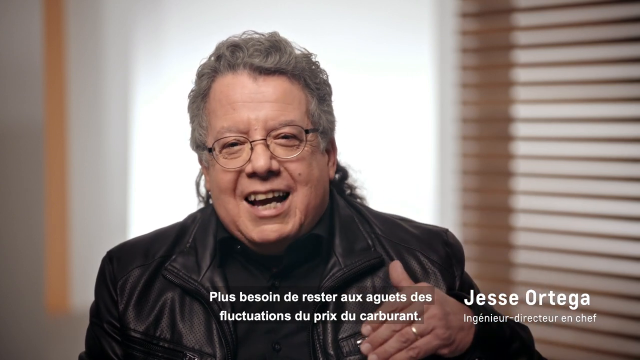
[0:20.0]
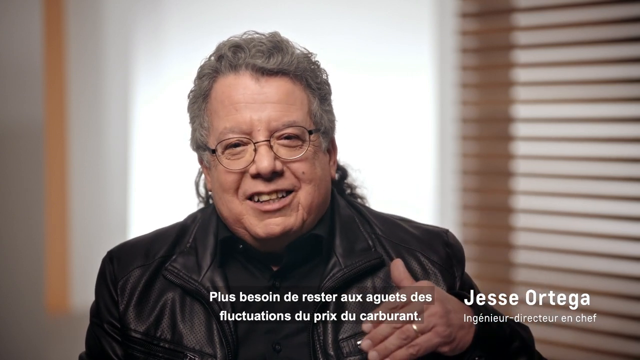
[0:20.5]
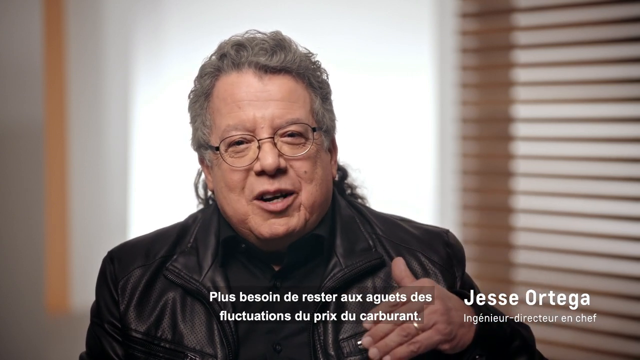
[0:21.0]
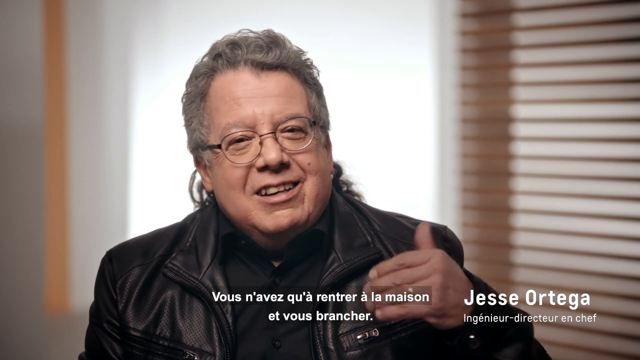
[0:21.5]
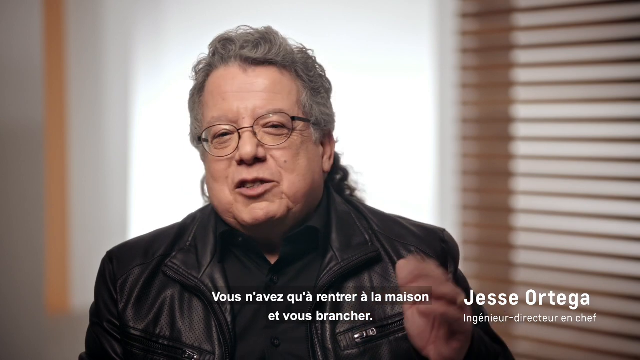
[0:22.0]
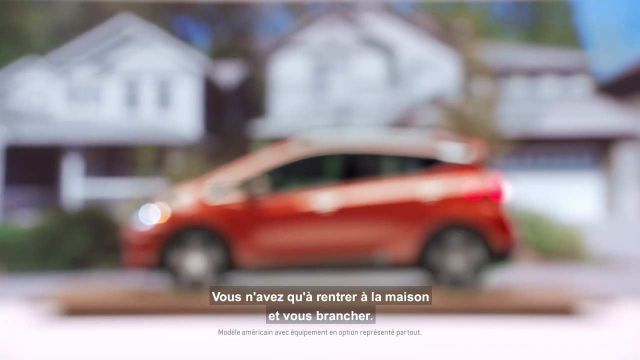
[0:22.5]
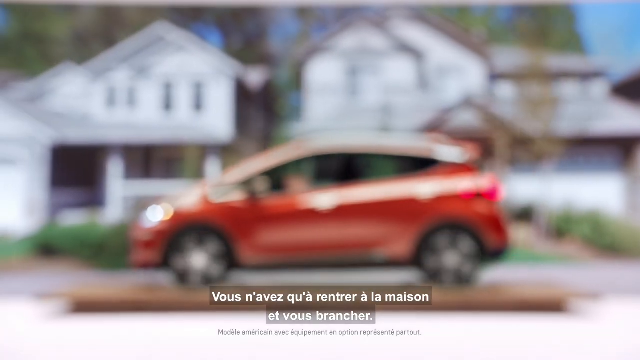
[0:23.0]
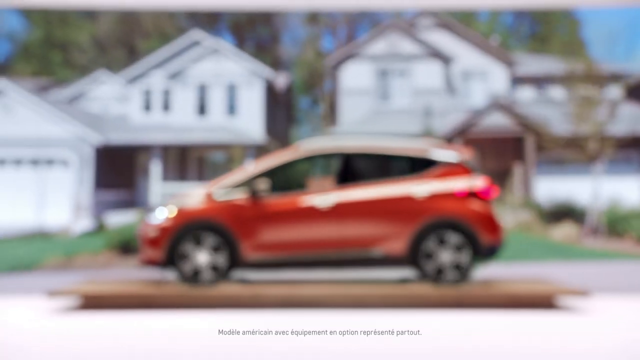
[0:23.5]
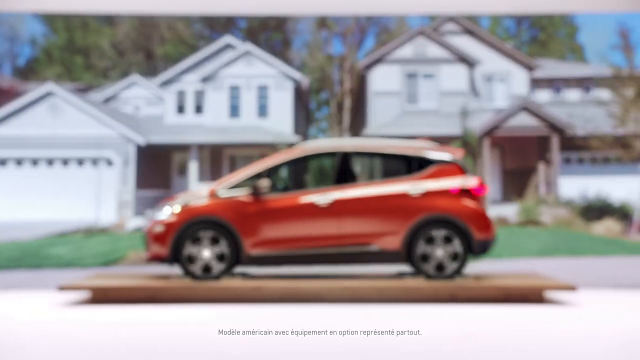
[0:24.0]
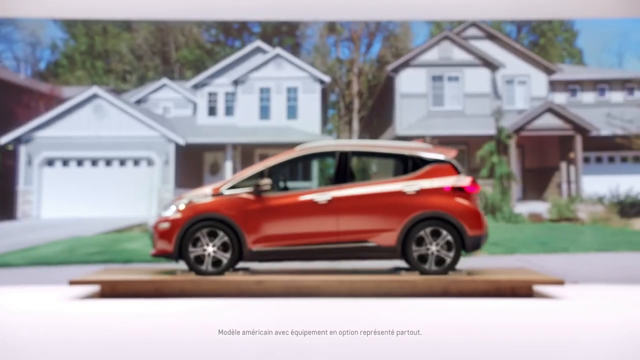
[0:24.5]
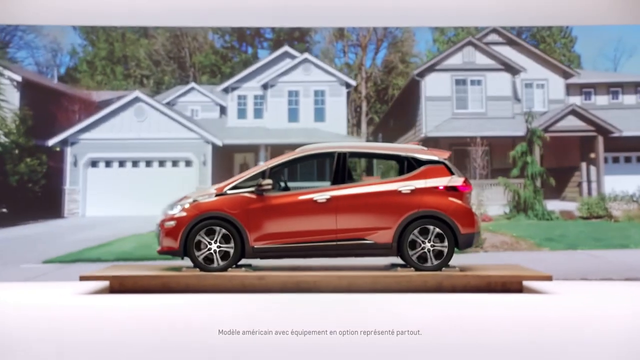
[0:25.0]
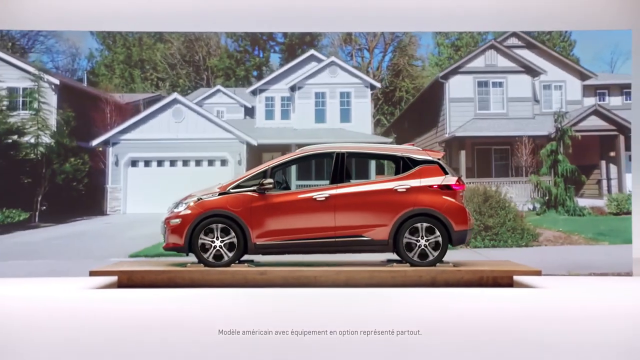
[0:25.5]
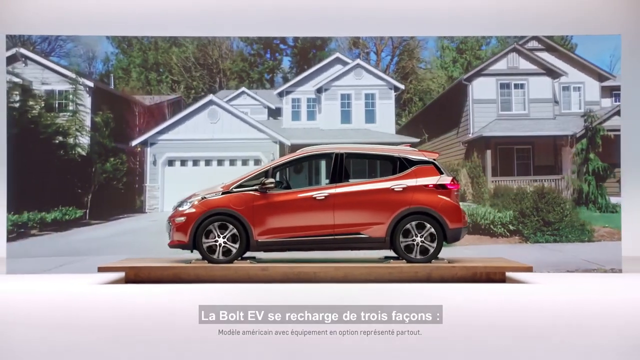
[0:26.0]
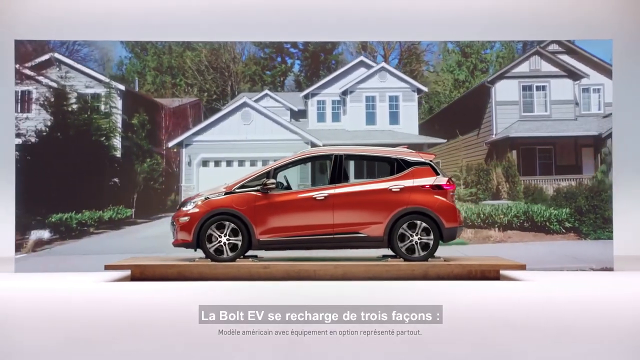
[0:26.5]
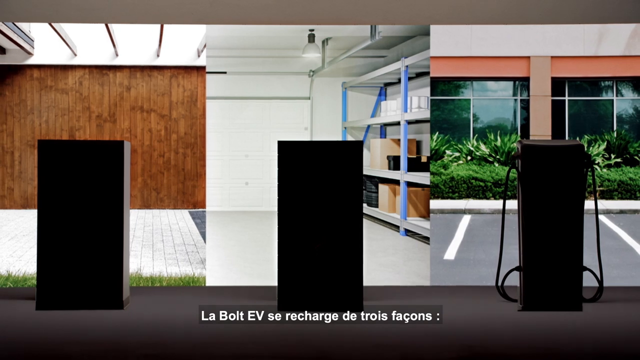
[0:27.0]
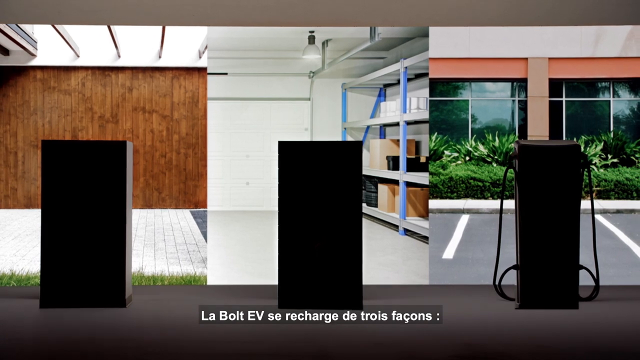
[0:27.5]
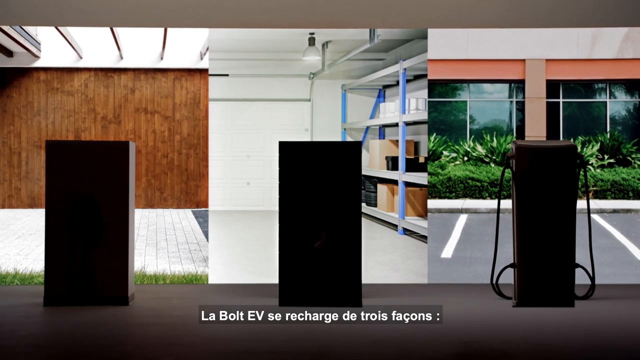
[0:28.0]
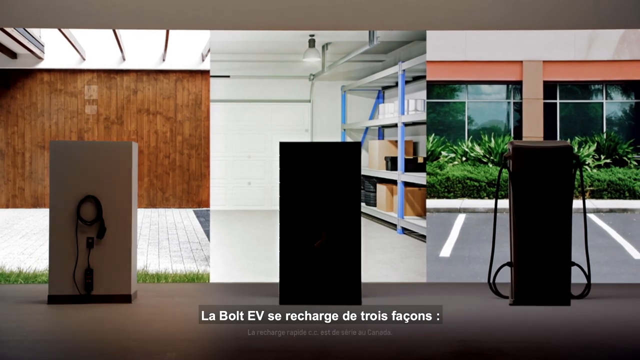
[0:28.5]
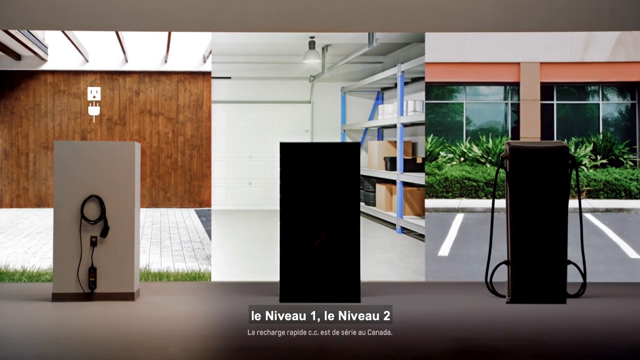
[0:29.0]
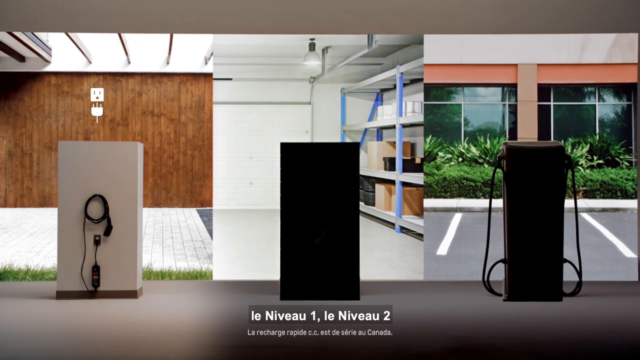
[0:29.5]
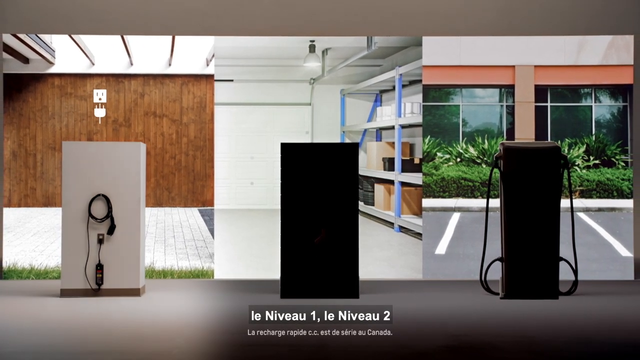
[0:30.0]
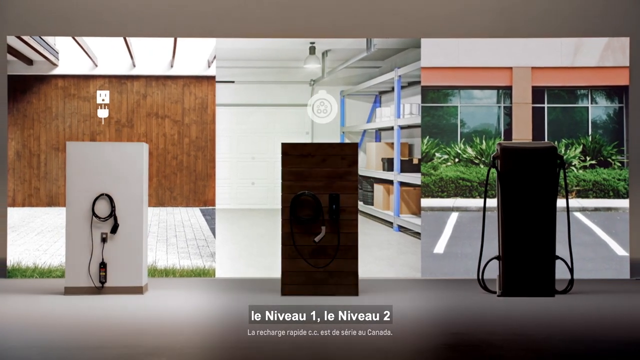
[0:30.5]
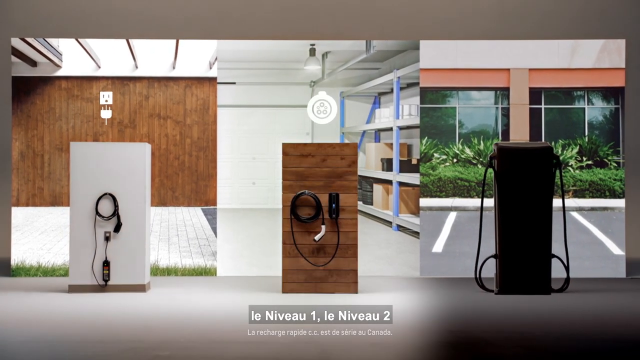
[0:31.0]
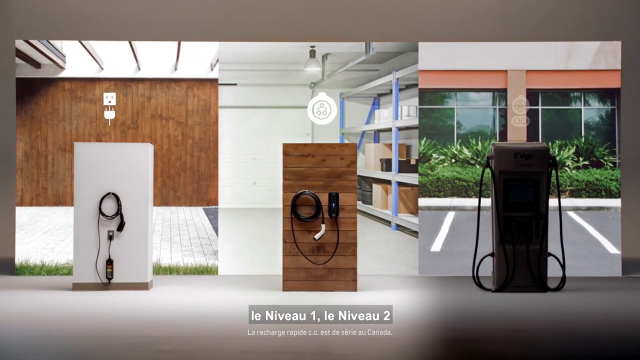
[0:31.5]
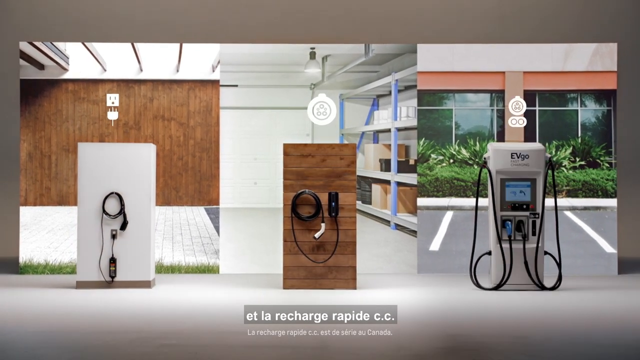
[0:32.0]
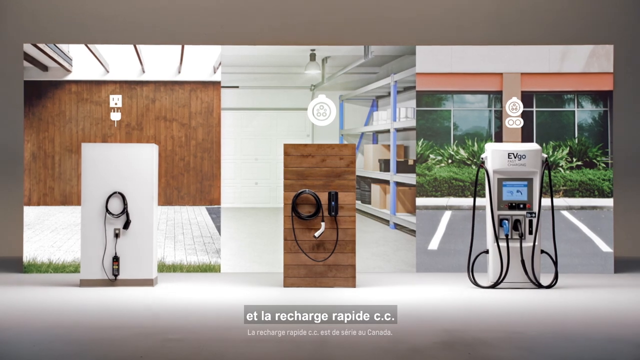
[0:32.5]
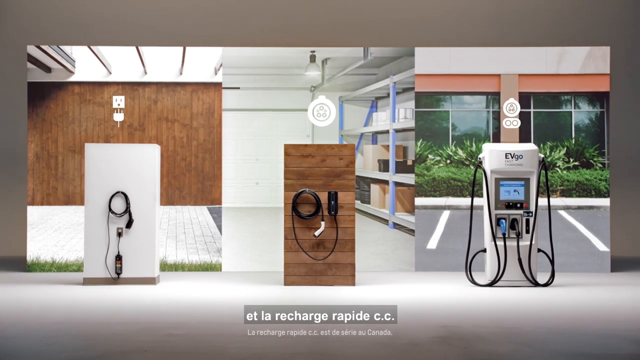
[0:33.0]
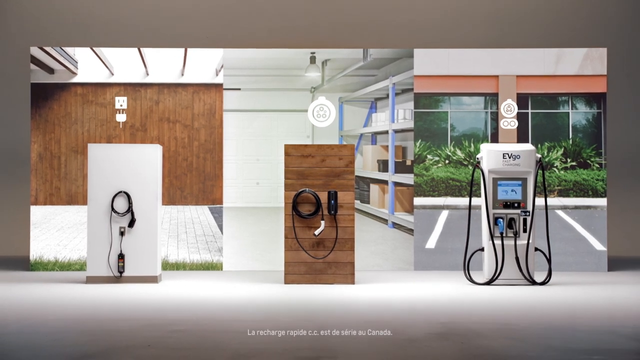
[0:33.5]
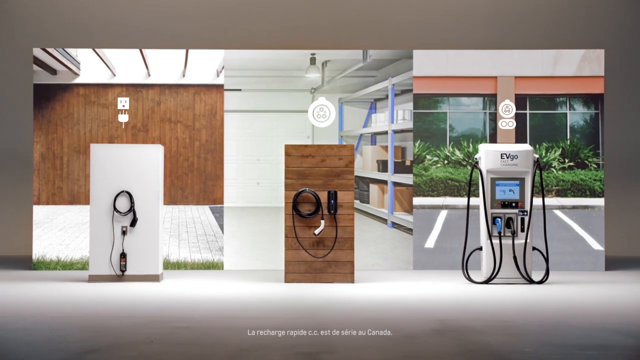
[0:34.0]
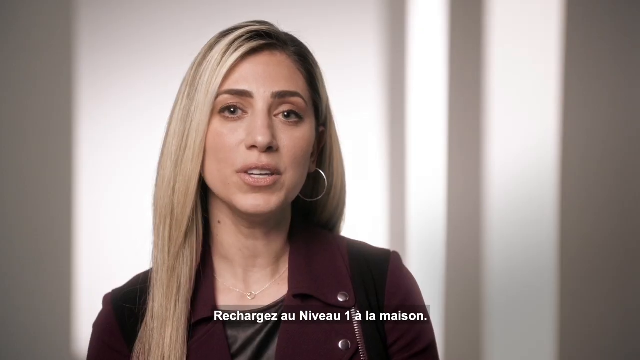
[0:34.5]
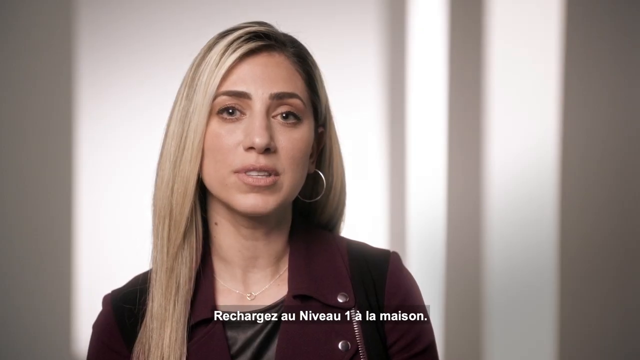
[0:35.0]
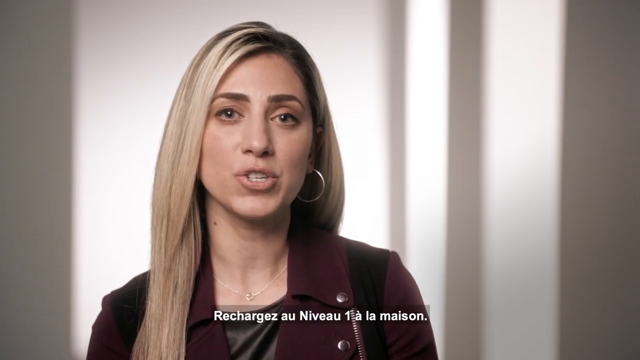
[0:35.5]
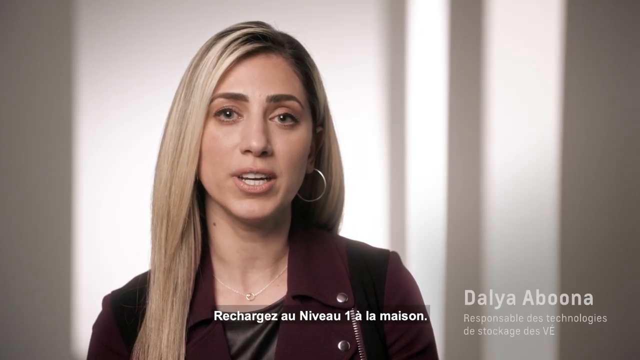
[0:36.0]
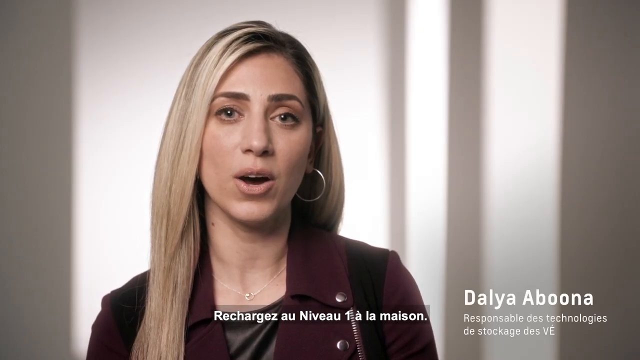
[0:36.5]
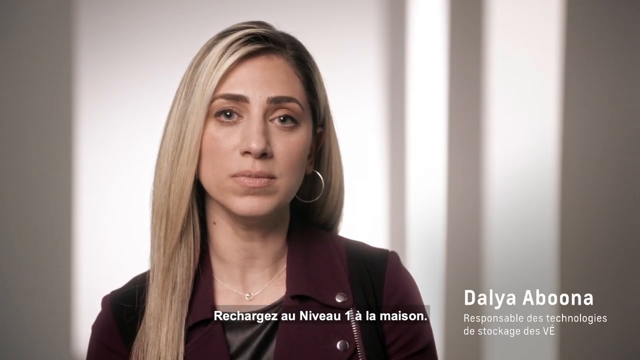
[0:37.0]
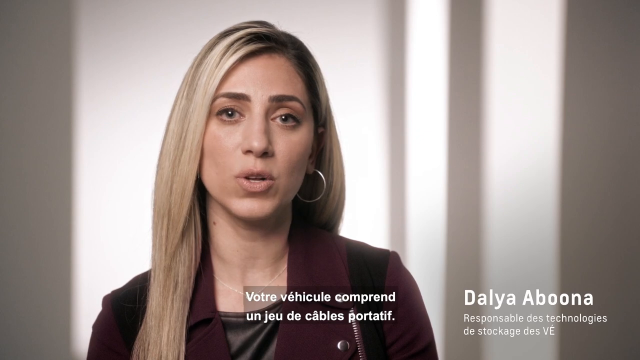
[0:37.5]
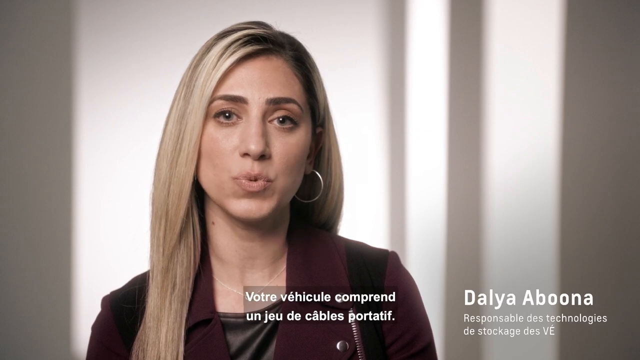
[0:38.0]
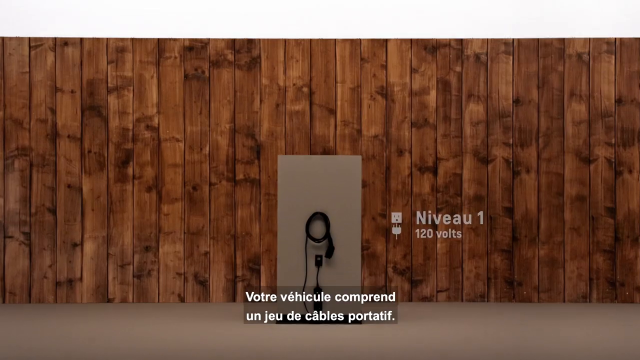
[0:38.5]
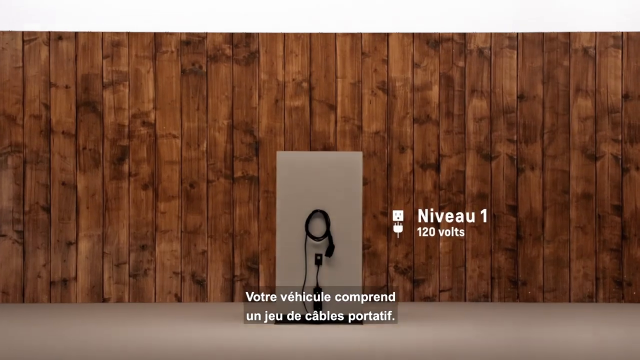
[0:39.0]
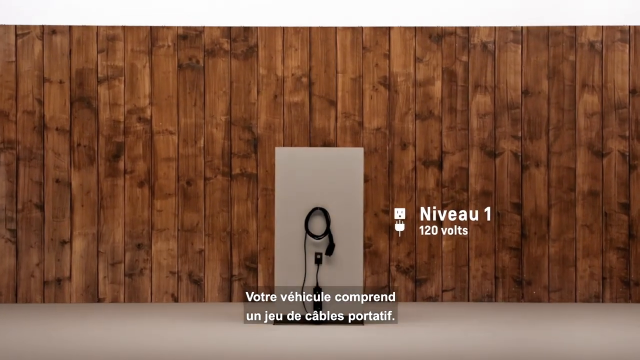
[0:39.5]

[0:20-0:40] A man talks to the microphone in a room with mini blinds to the right and, to the left, an open window with curtains over it that still let in a lot of natural light. The man is Jesse Ortega, in his 50s or 60s, with gray hair in a ponytail behind him. He is slightly overweight and wears a black leather jacket and a black shirt with the top button undone. He waves his left hand for emphasis as he talks, and subtitles of what he says appear at the bottom. A red vehicle is then shown on a platform with rollers so its wheels can move, and behind it a screen shows really nice homes passing on the right. Next, three electric charging devices are shown, one on the left, one in the middle and one on the right, each with a different example: the left one plugs into a regular plug, the middle one has a garage in the background, and the right one has an office building in the background. The left one seems to be the cheaper one and the middle one seems a little more expensive and complicated, while the right one is a full station like a gas pump but for EV, white, with two lines to attach to vehicles to recharge them. A woman then appears and talks to the camera. Her hair is parted so that, in the image on the left, it goes down the side of her body in front of her shoulder, and on the right it goes behind her shoulder. She wears a hoop earring, a burgundy top, and a necklace with a pendant in the middle.